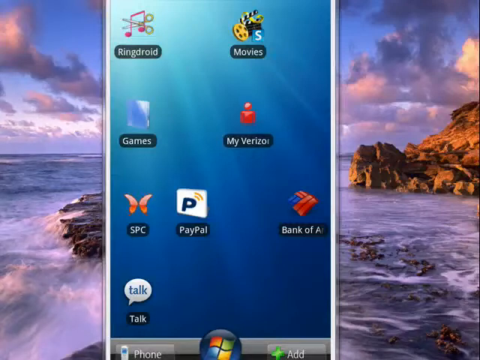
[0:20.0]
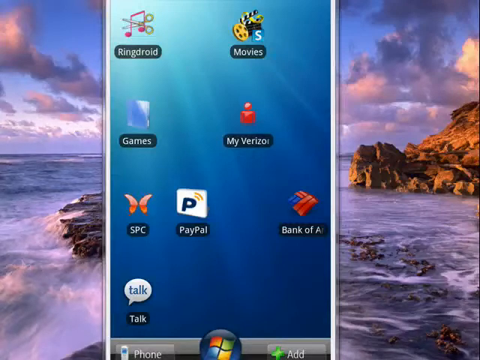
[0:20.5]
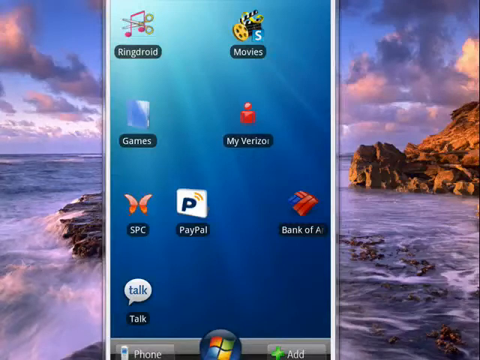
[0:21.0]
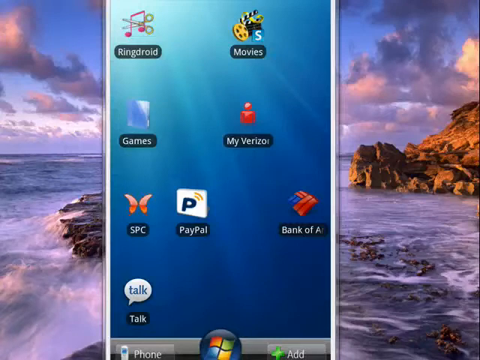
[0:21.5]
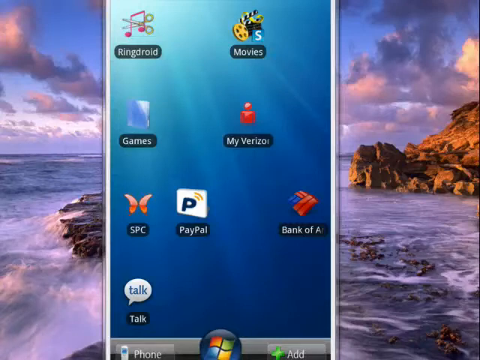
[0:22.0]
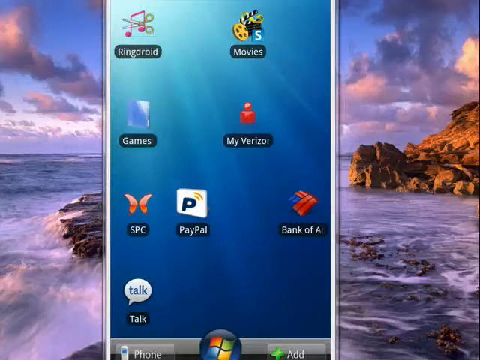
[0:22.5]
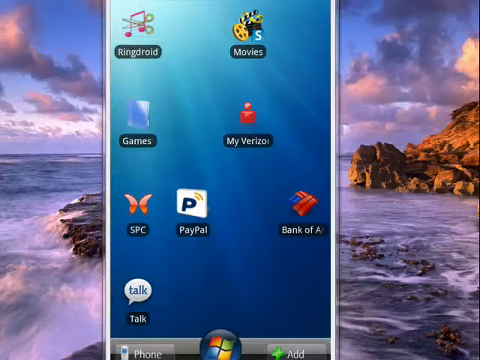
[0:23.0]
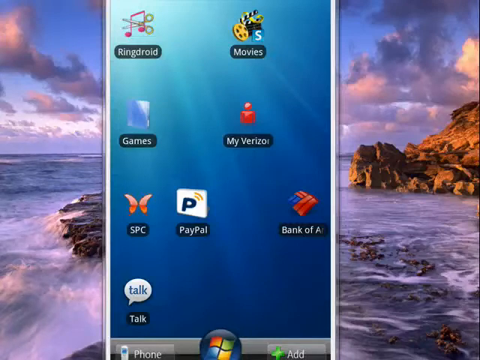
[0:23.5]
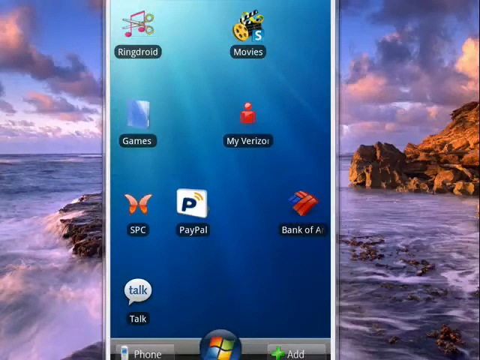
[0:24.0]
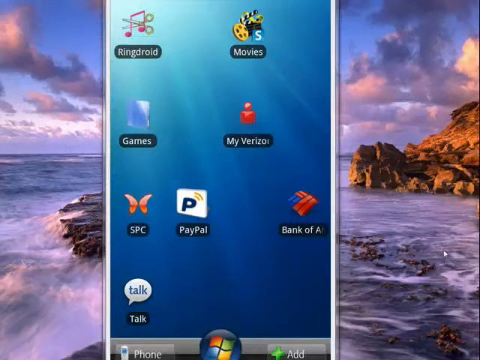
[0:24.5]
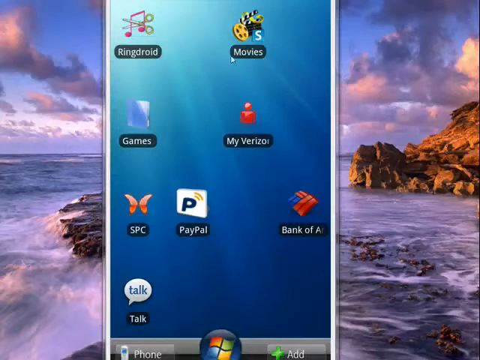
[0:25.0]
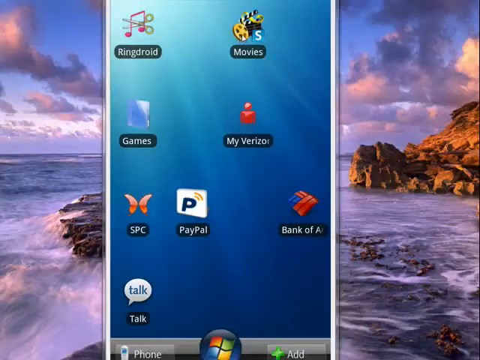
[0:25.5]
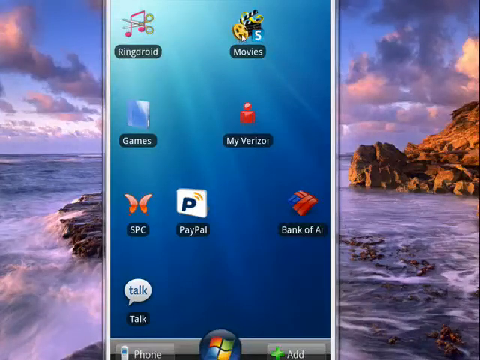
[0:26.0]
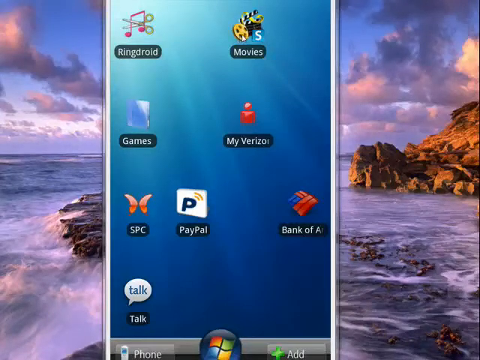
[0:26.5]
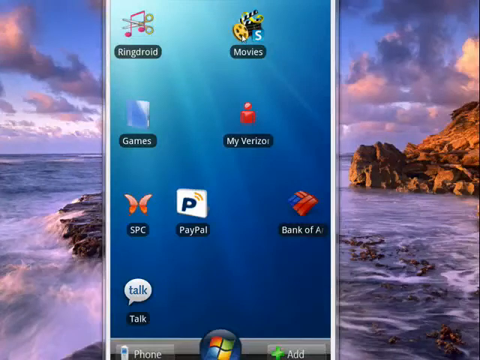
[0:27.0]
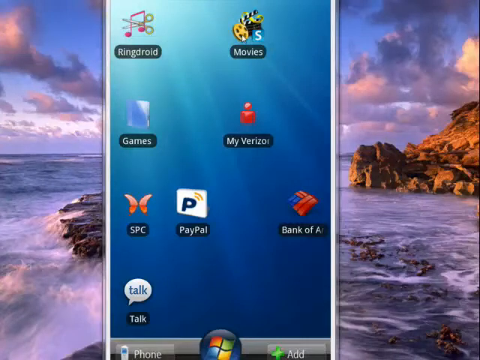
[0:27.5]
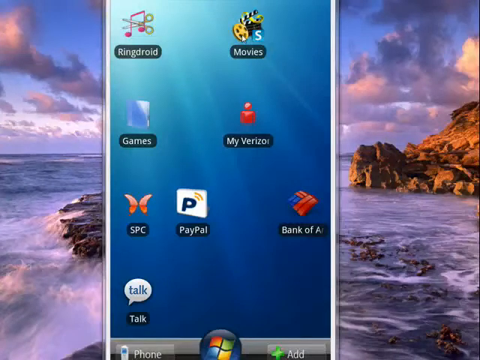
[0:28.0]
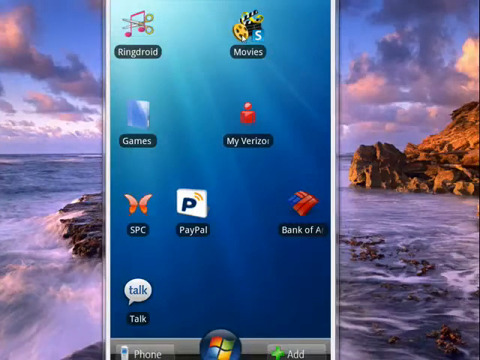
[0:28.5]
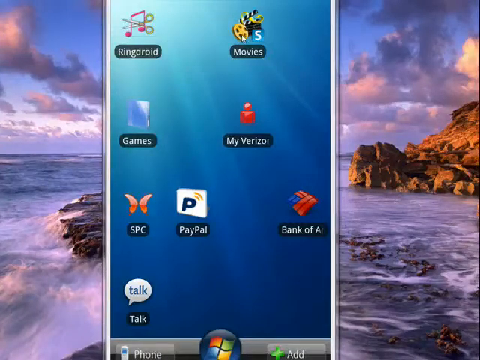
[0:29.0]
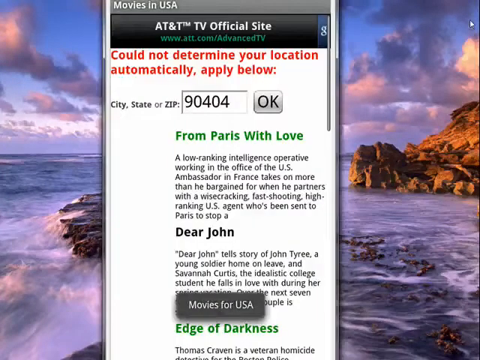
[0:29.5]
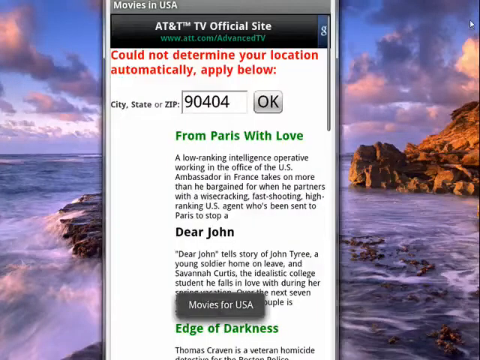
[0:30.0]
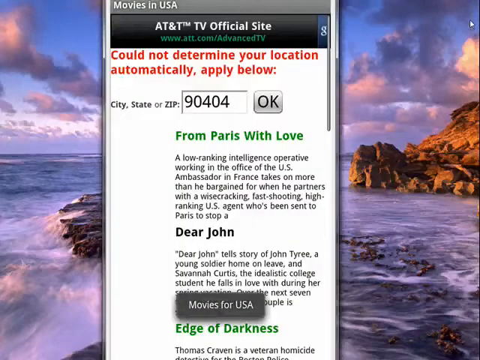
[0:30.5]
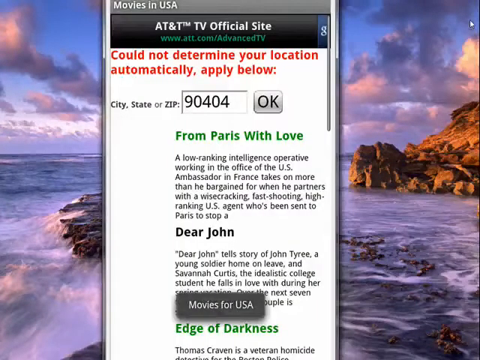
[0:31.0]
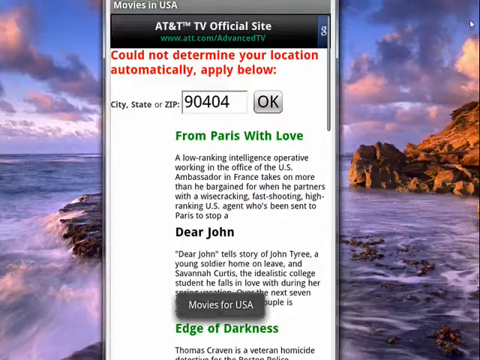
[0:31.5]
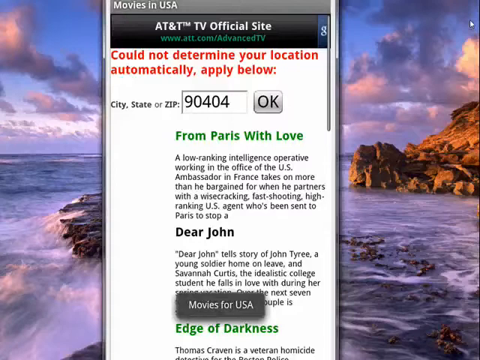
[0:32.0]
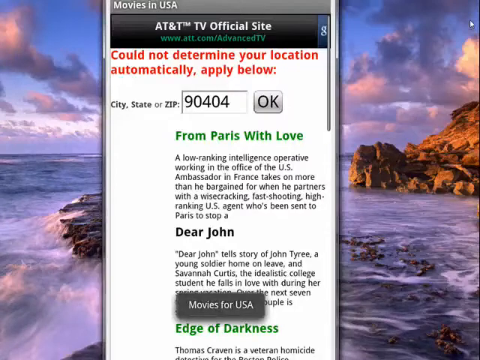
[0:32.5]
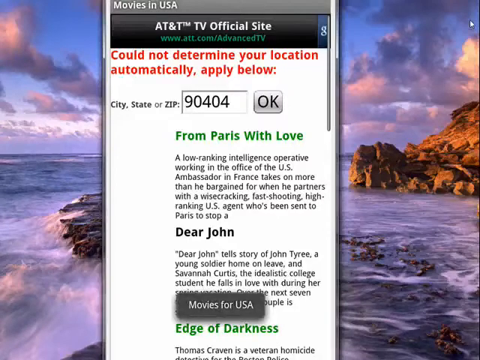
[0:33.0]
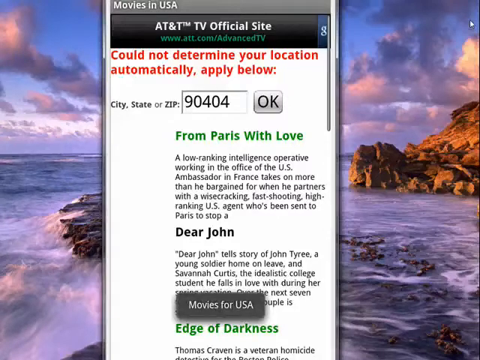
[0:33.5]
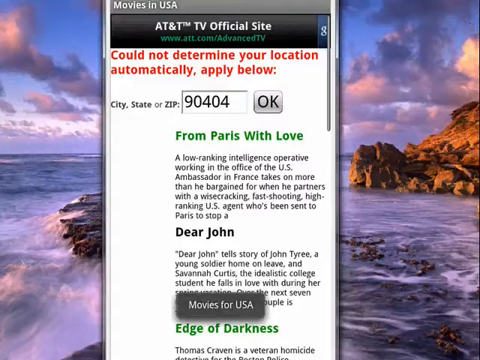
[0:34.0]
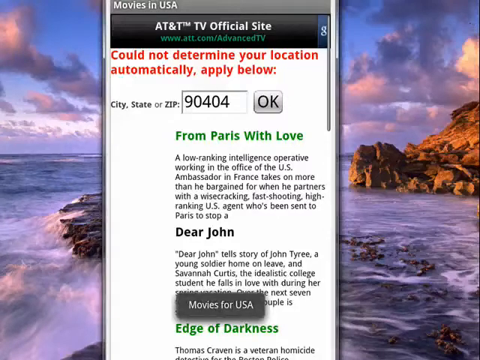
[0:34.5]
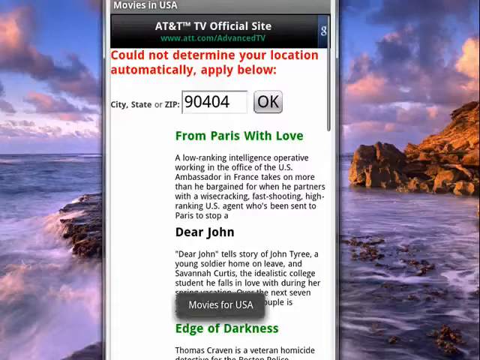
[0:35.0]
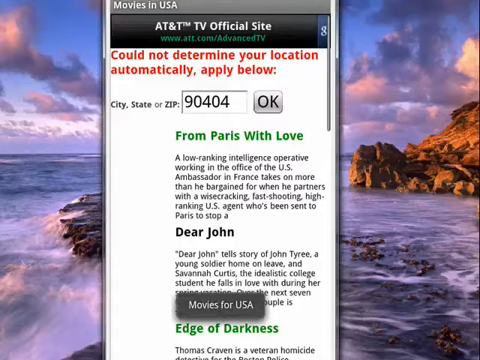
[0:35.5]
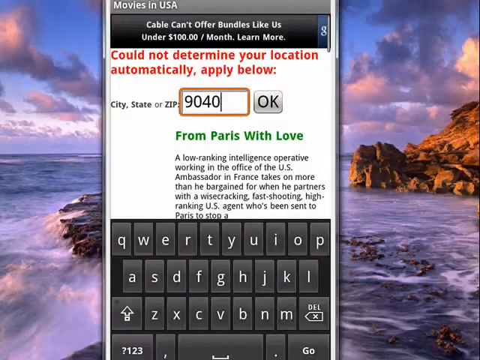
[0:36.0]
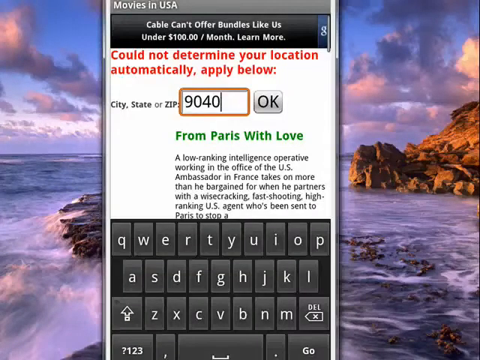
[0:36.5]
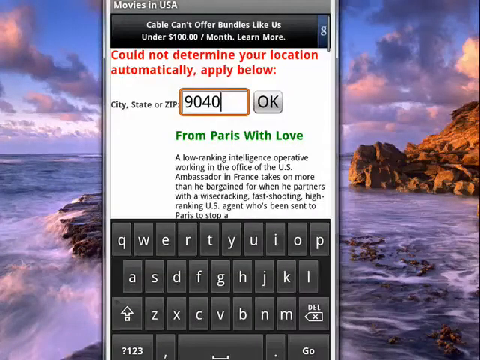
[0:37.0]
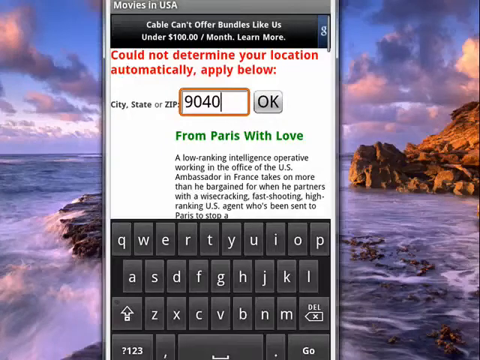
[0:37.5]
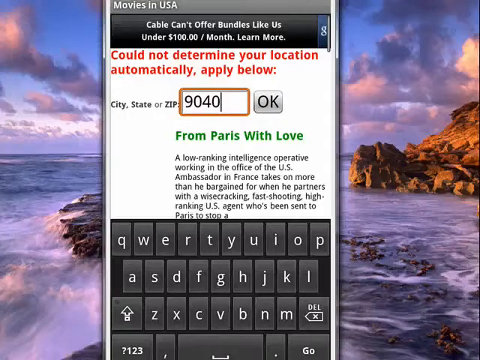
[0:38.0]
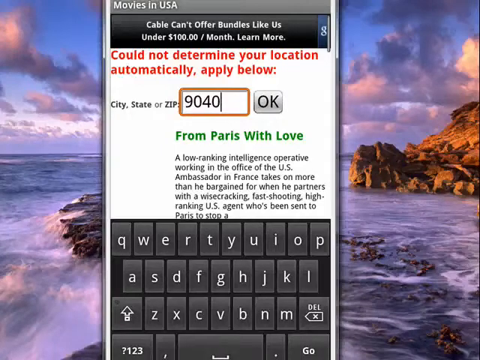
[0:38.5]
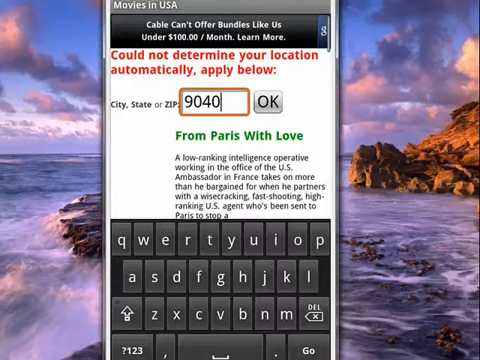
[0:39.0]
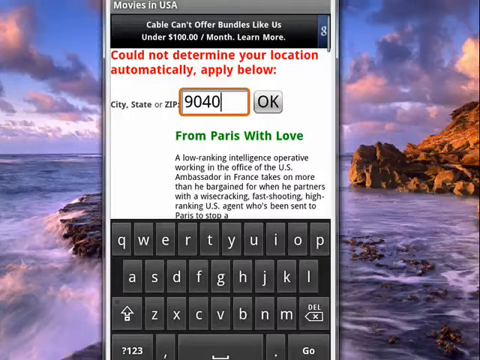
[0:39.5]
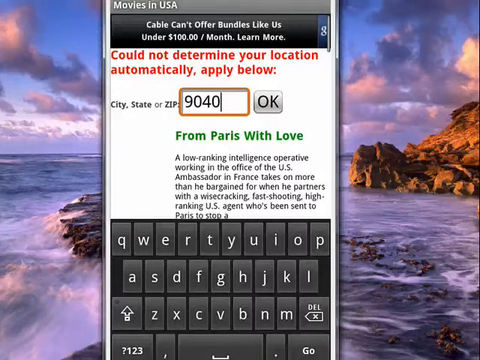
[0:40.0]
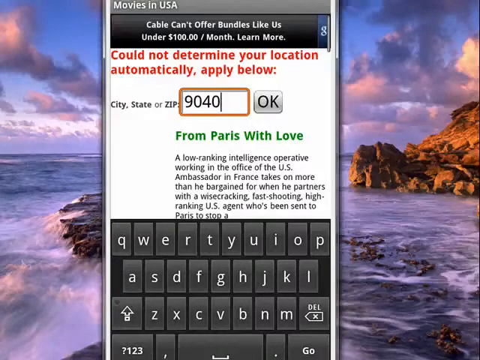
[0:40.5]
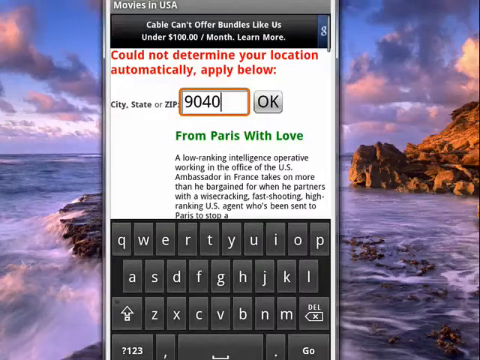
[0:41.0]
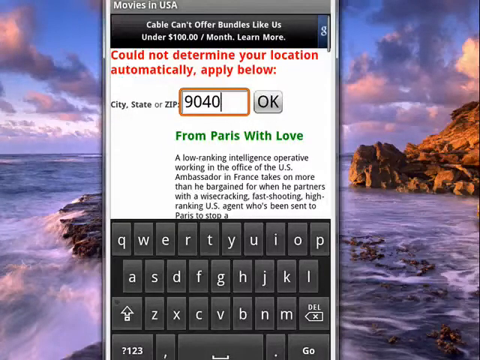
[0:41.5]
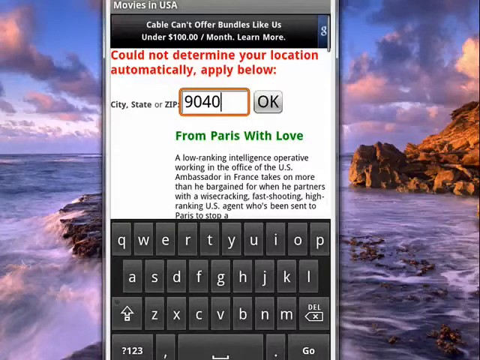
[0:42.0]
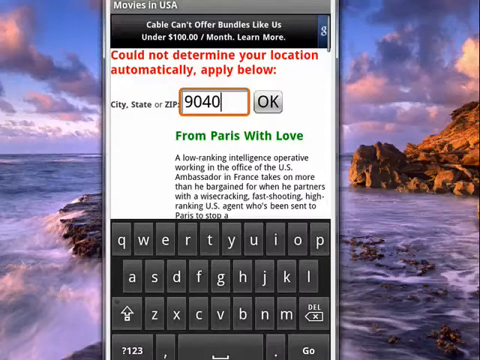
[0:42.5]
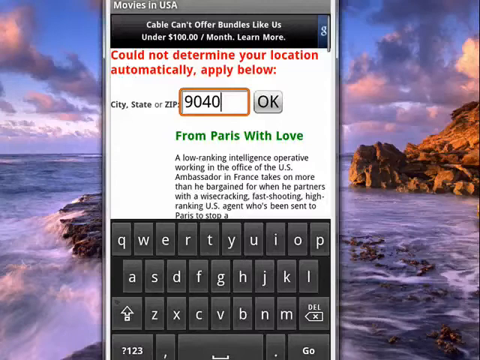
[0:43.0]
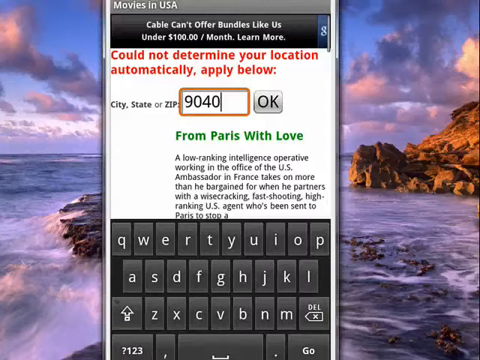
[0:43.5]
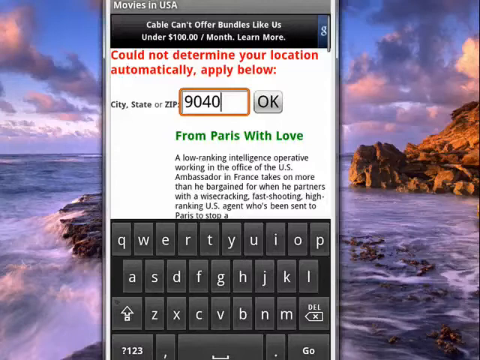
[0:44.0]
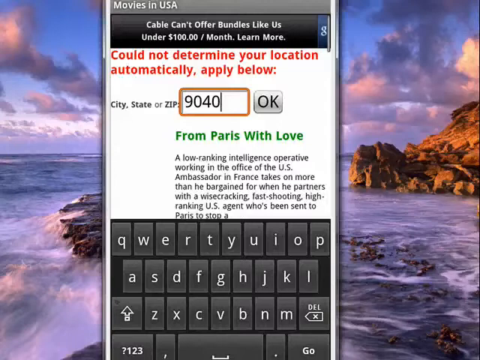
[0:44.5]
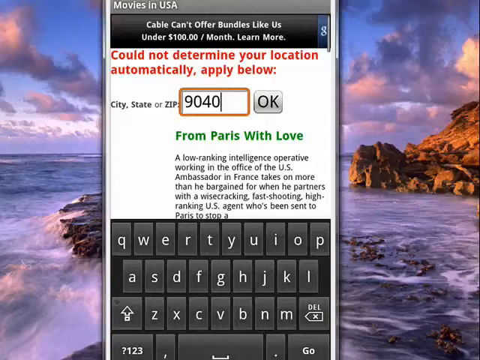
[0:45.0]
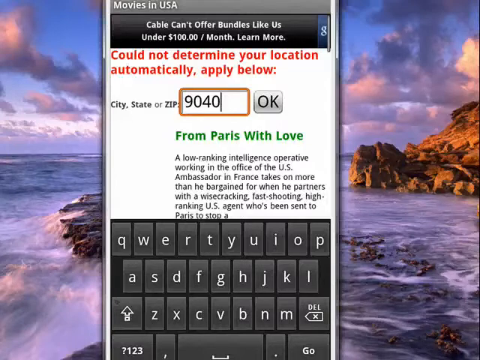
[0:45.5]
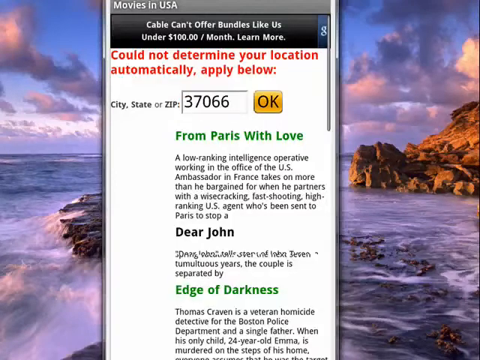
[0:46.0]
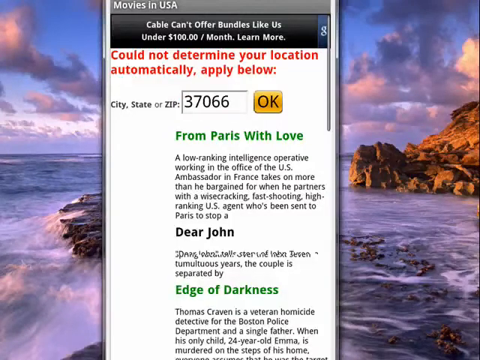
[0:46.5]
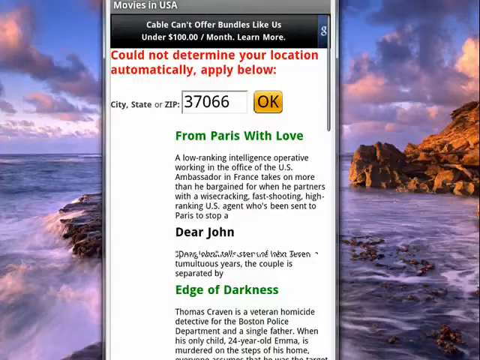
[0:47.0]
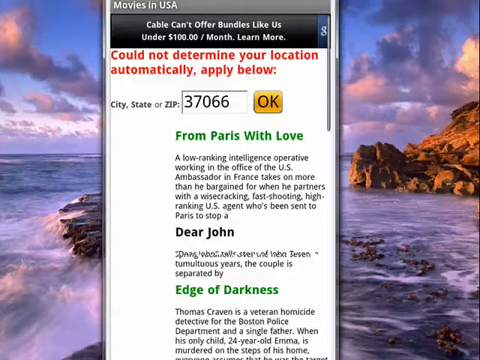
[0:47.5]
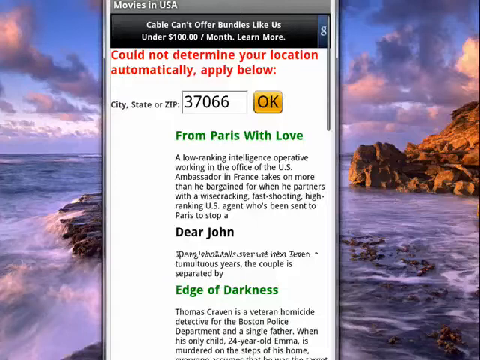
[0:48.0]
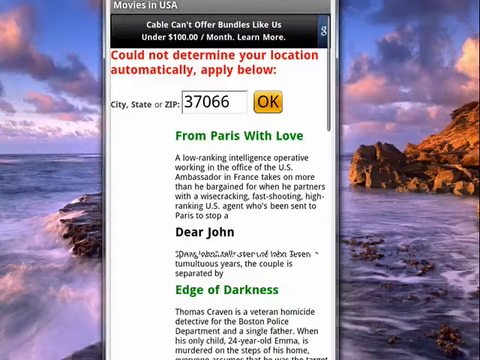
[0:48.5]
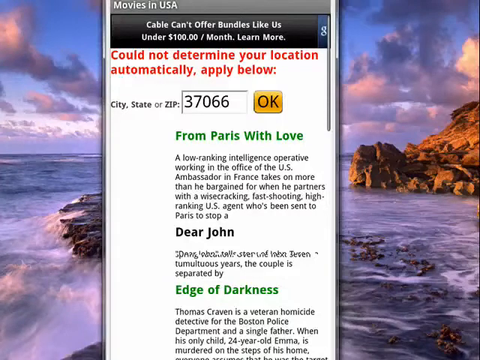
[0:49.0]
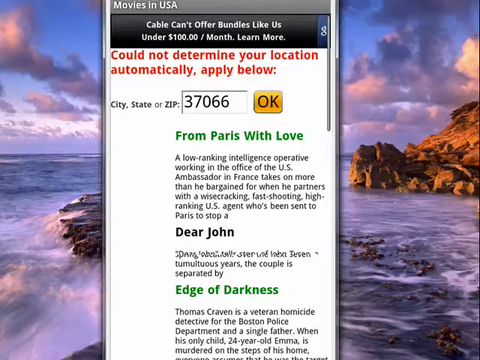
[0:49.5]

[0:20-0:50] The mouse hovers over the movies logo and clicks it, bringing up a new site with "Movies in the USA" at the top. Below it is a black banner reading "AT&T TV official site" with the website underneath. Below this is a white background containing most of the text. In red it says "could not determine your location automatically, apply below," followed by "city, state or zip," where 90404 has been typed in as the zip code, with a big "OK" next to it. Underneath are some movies with their descriptions: From Paris with Love, Dear John and Edge of Darkness. The person clicks into the zip code box and pastes a new zip code, 37066. A keyboard comes up at the bottom and then vanishes.